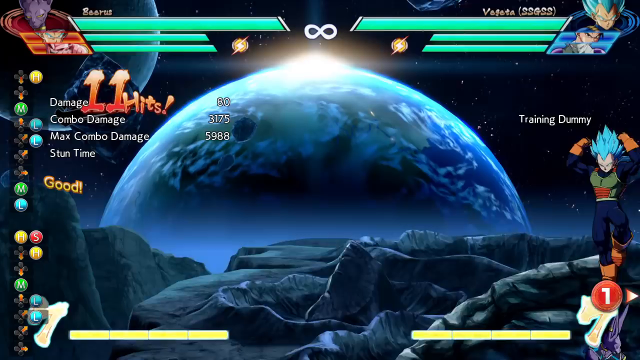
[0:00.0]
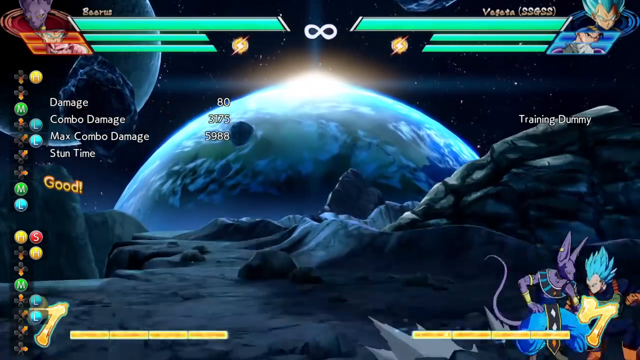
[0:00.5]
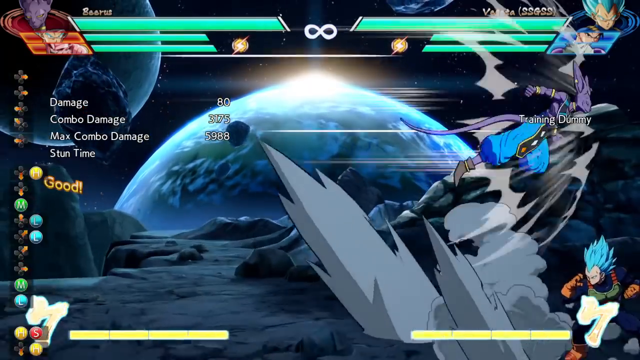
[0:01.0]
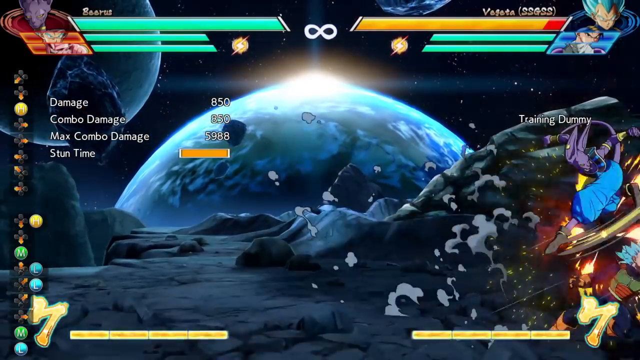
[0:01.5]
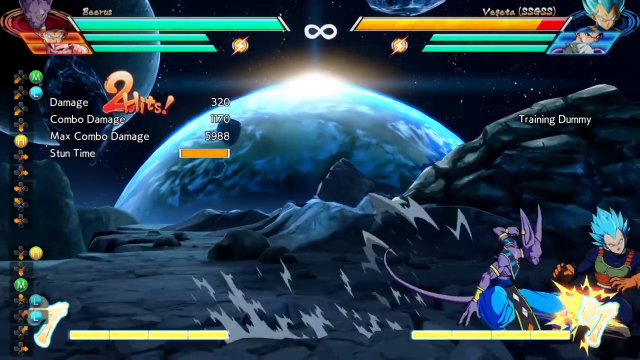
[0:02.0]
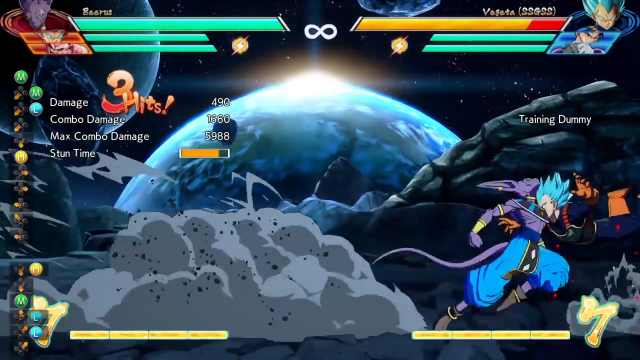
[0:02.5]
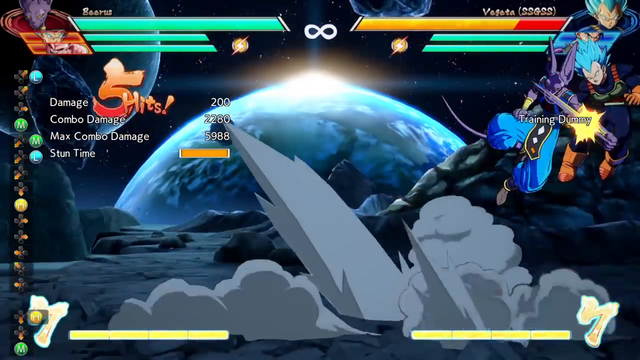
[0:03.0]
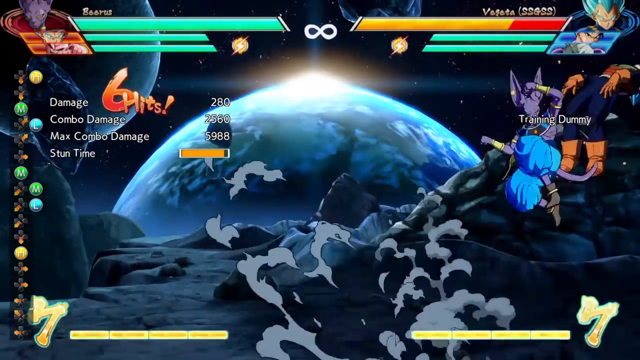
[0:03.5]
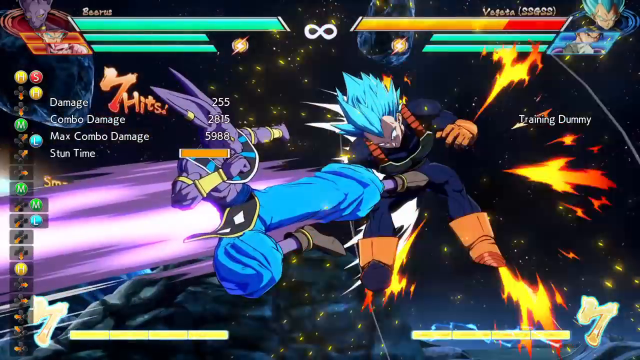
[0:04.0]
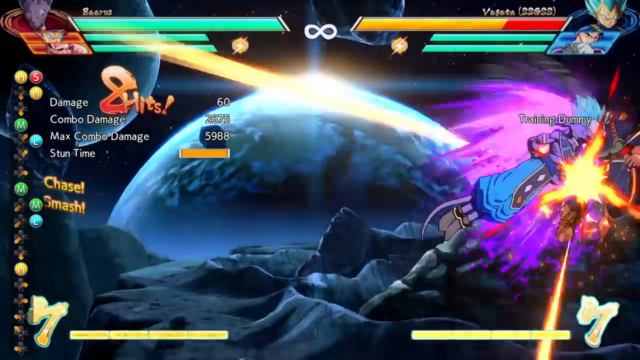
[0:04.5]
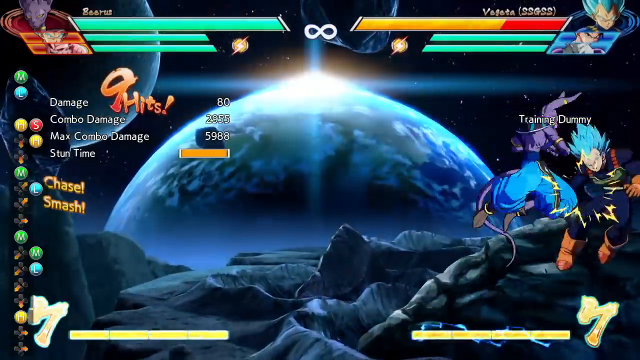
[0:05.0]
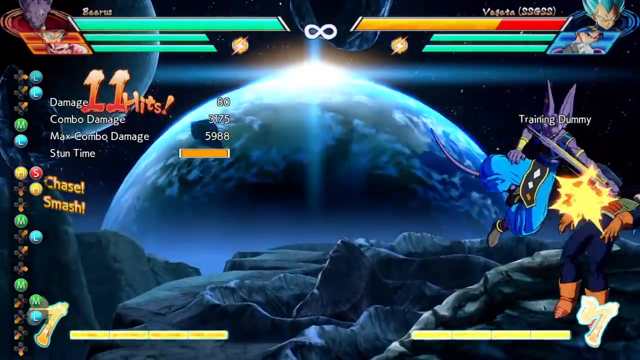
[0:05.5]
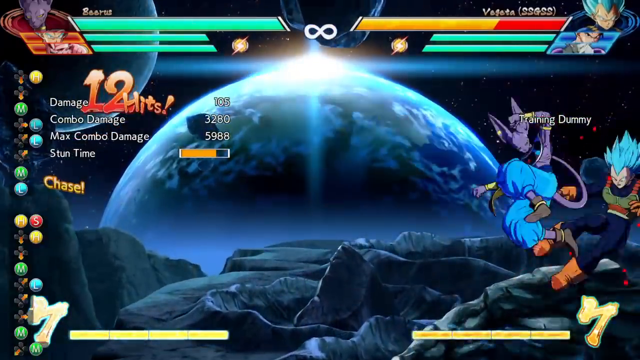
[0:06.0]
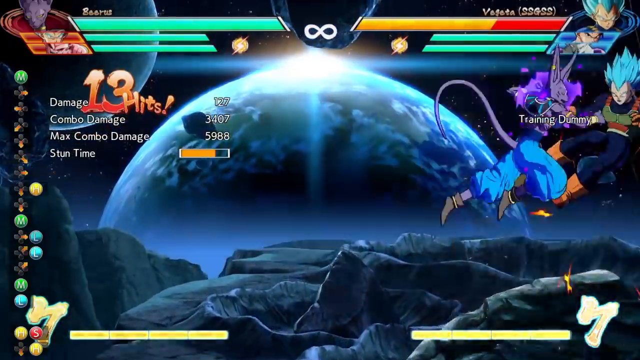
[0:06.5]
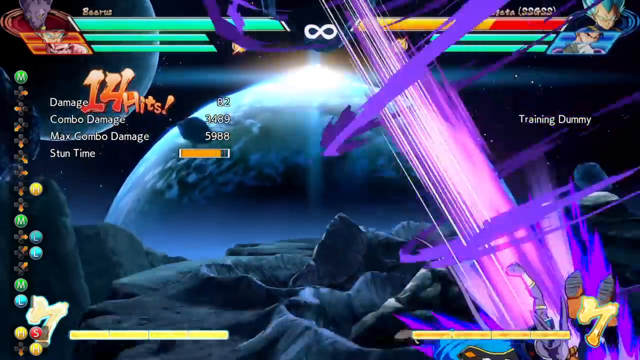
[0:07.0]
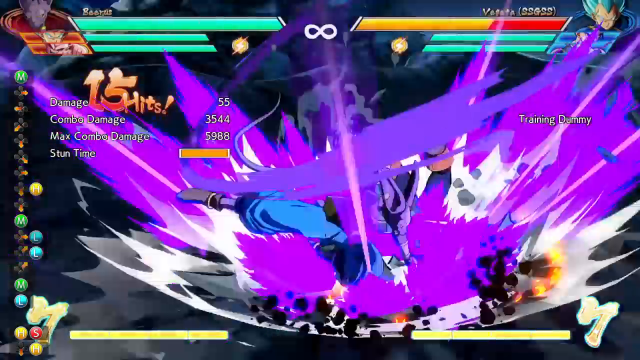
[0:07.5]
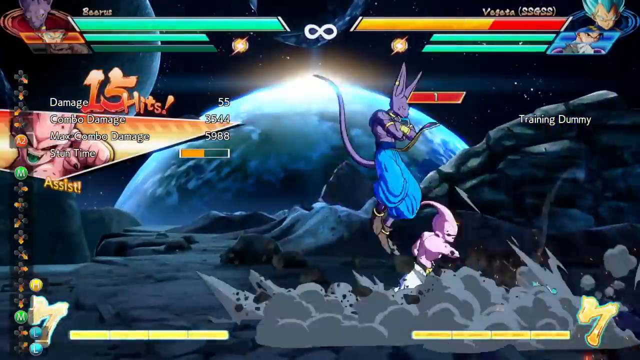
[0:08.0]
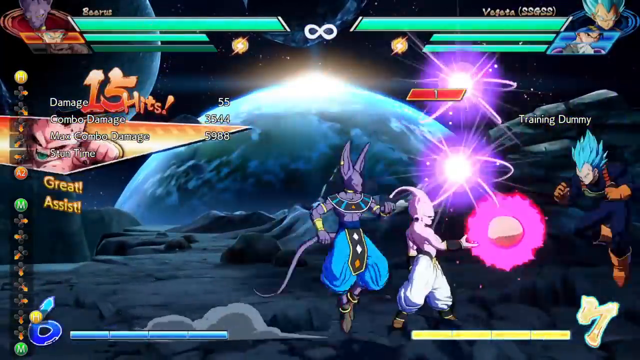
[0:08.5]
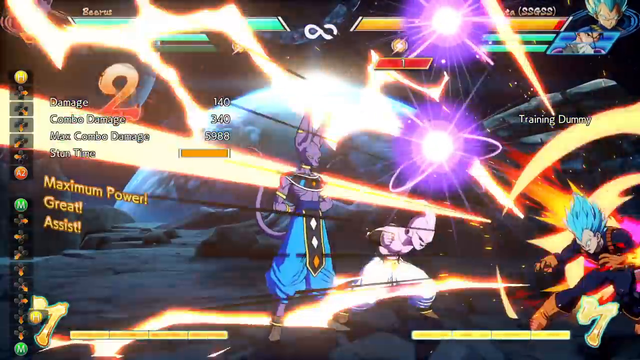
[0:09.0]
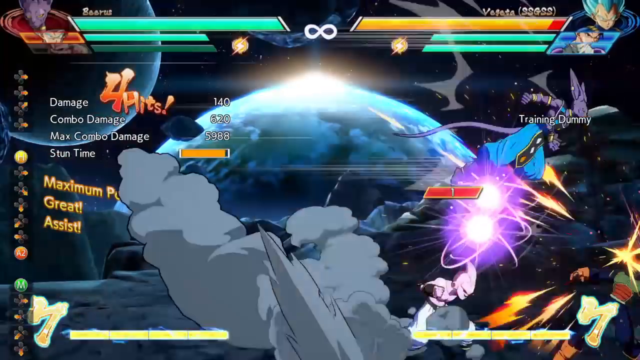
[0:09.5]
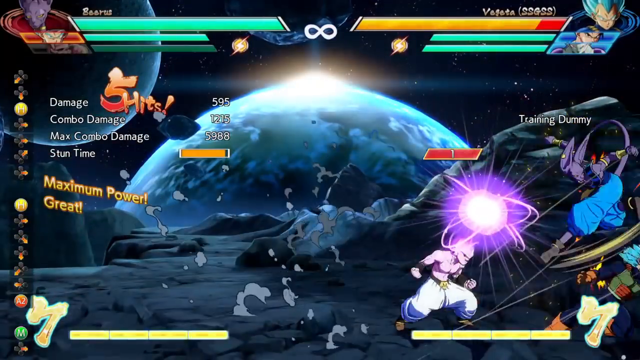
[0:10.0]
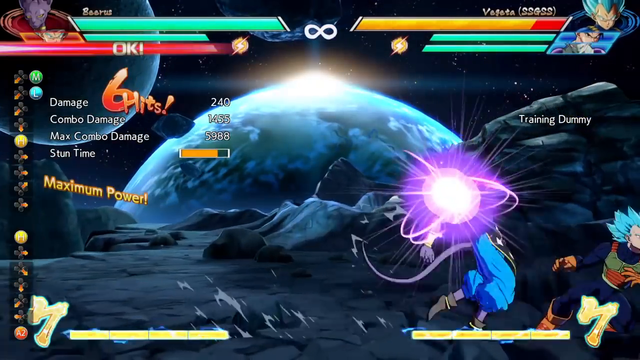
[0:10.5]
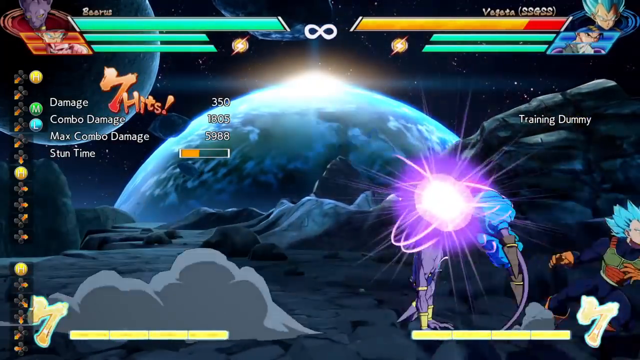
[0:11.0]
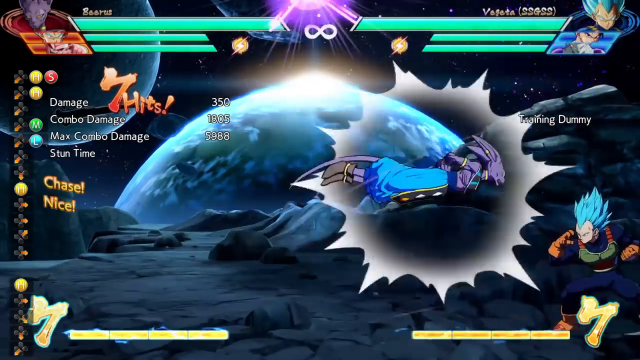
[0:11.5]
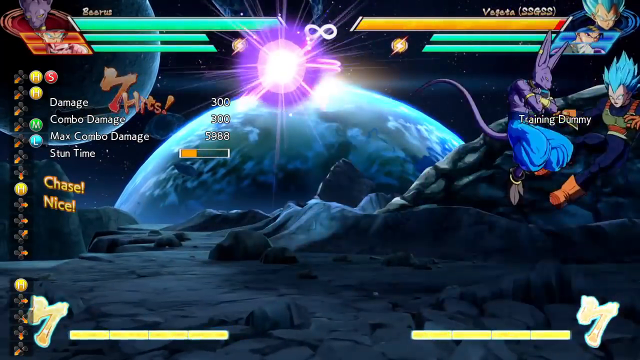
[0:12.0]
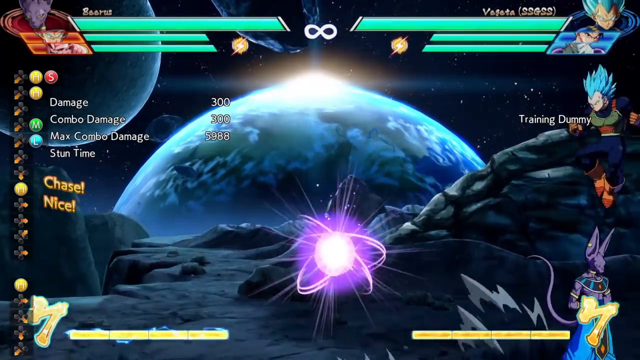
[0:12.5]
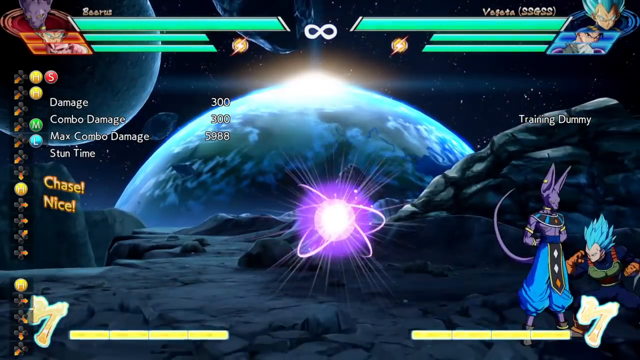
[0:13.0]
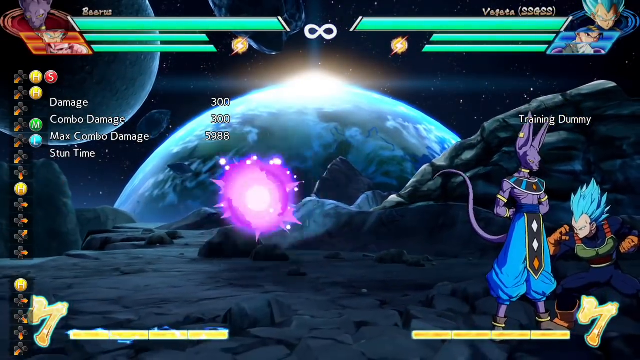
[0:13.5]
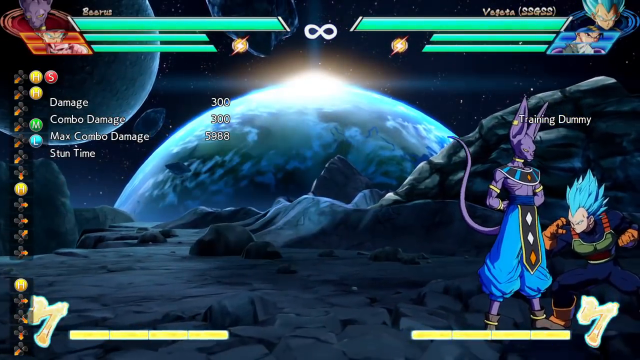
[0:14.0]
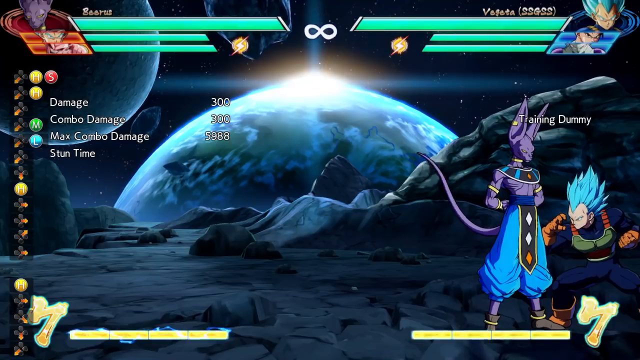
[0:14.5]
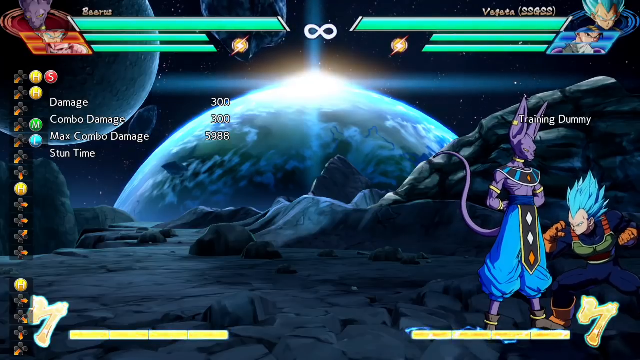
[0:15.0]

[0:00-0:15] A cartoon-like fighting game is set on another planet that is very rocky, and in the background part of Earth apparently can be seen. The game looks very dark, as if set in outer space or at night, and a very bright light shines at the top of Earth. At the top of the screen there appear to be different indicators for the two characters on the screen; these indicators are bright green. The characters perform various moves and fight with each other, with lots of flashes and cartoon-like shapes coming up on the screen. The game is very fast paced, and as each character performs their different moves, orange text comes up on the screen showing the hits being performed, with the number going up each time.